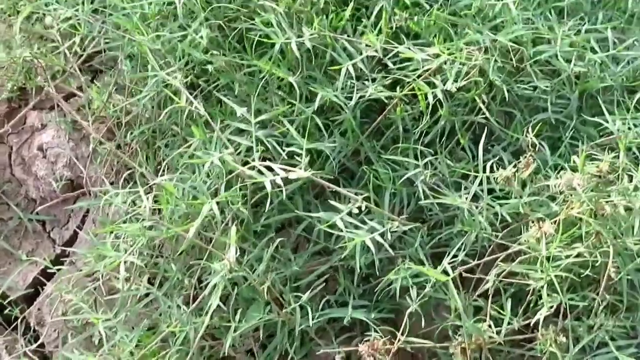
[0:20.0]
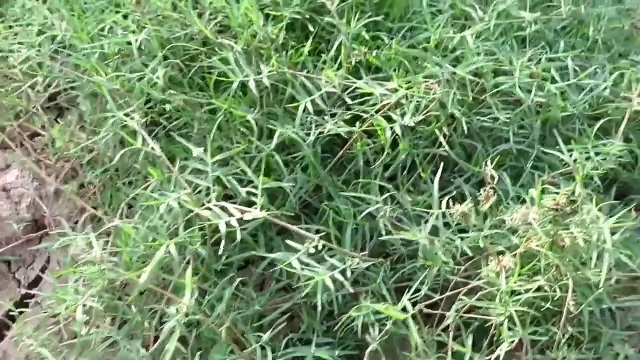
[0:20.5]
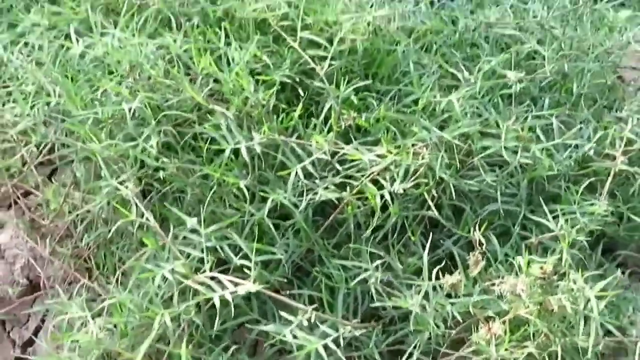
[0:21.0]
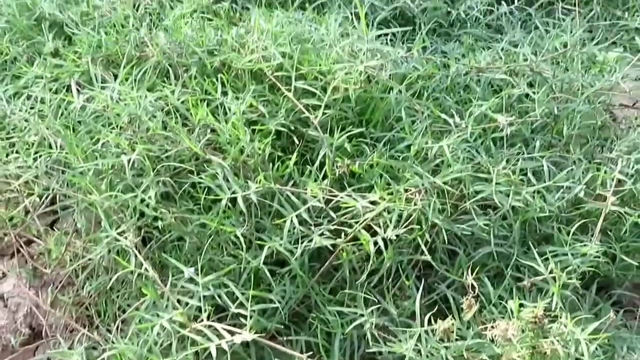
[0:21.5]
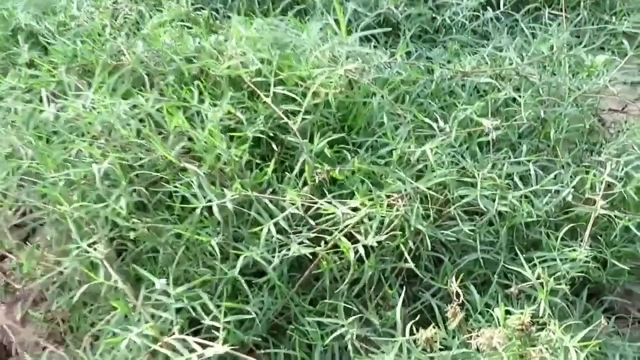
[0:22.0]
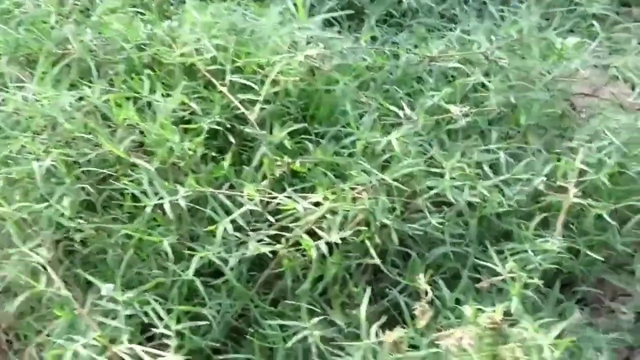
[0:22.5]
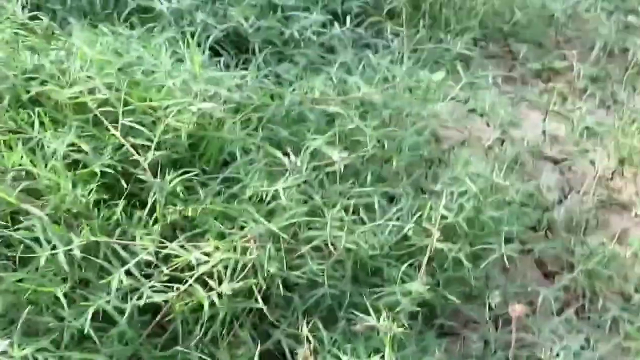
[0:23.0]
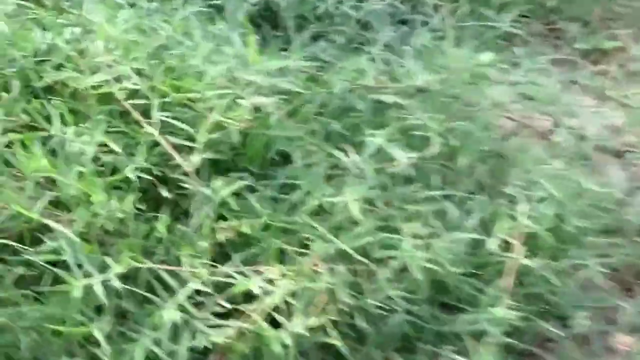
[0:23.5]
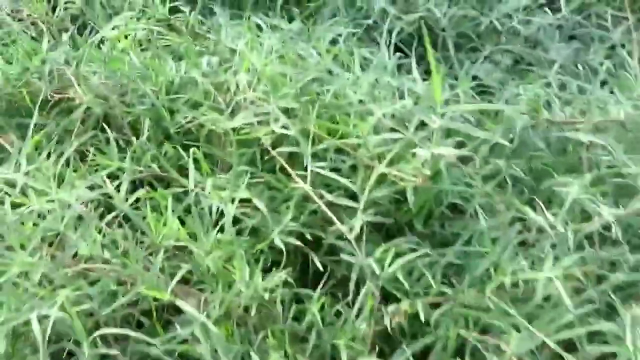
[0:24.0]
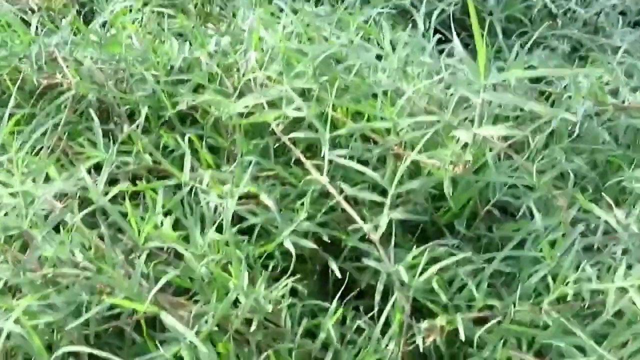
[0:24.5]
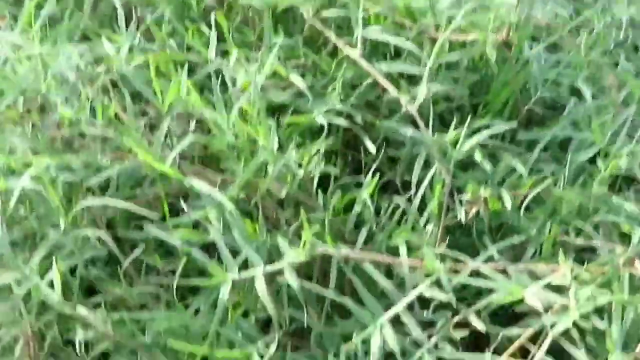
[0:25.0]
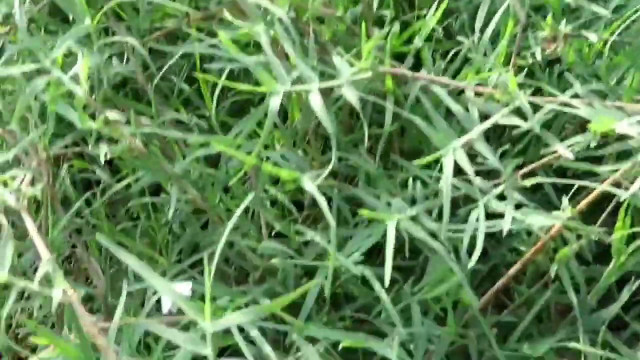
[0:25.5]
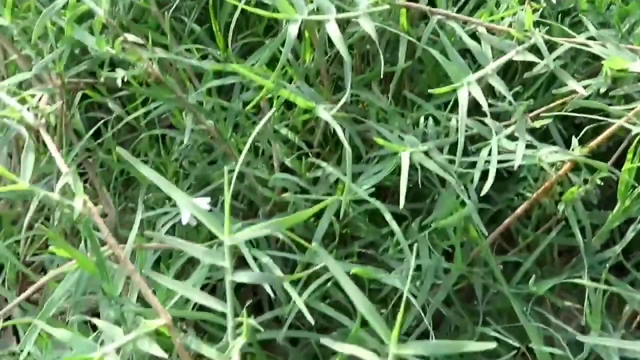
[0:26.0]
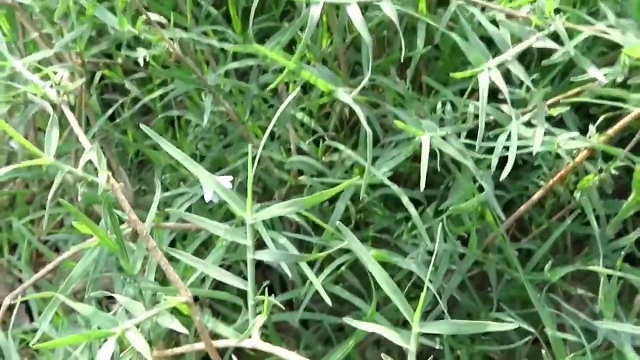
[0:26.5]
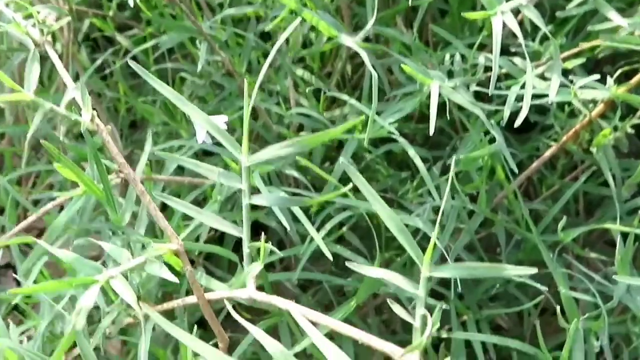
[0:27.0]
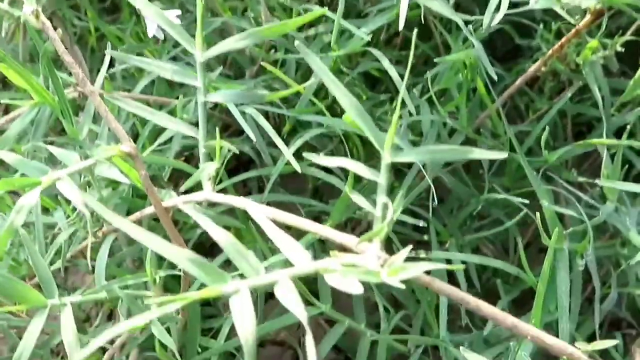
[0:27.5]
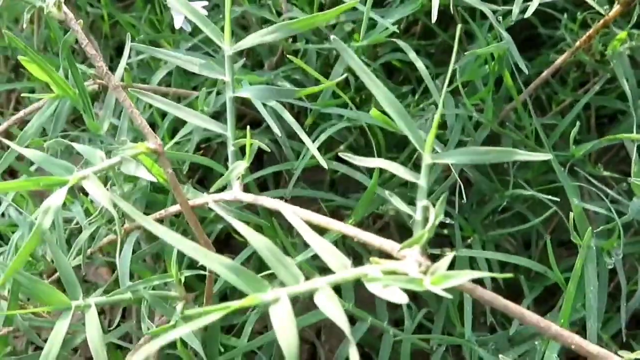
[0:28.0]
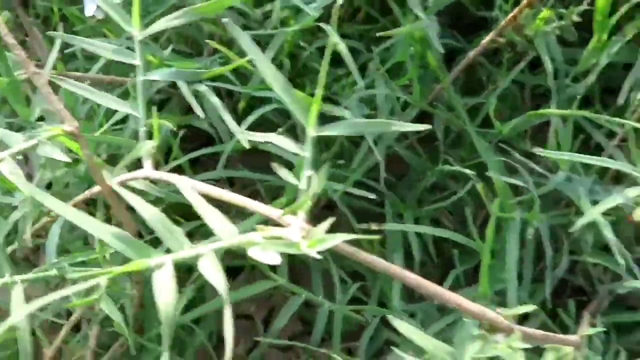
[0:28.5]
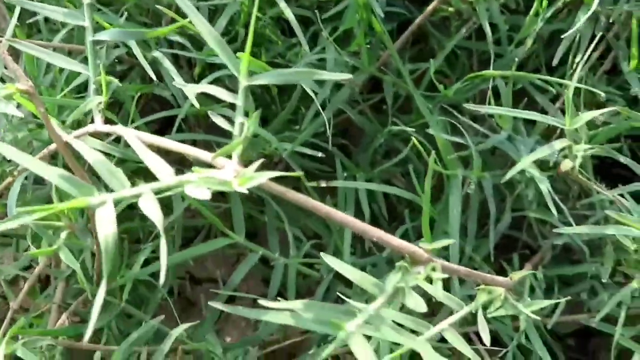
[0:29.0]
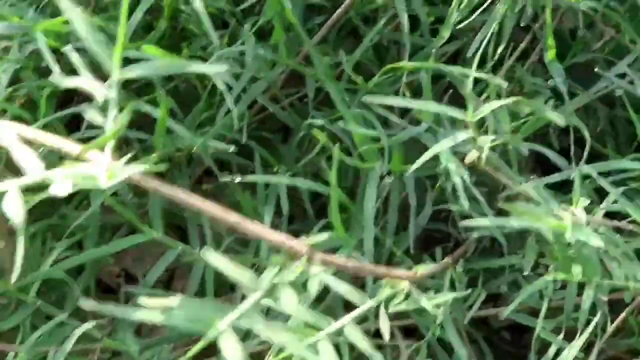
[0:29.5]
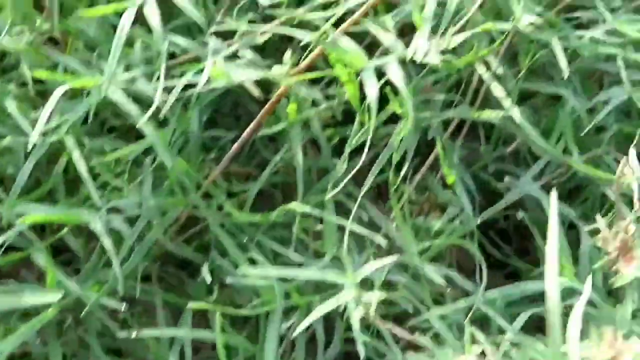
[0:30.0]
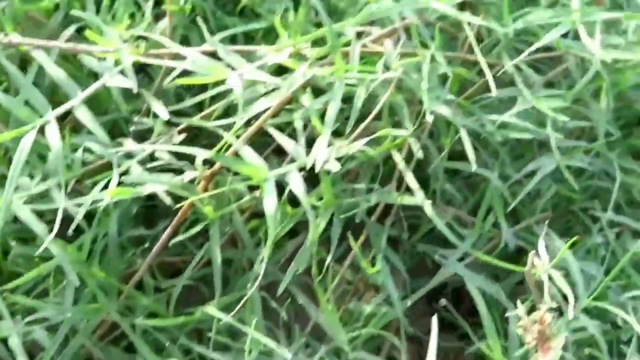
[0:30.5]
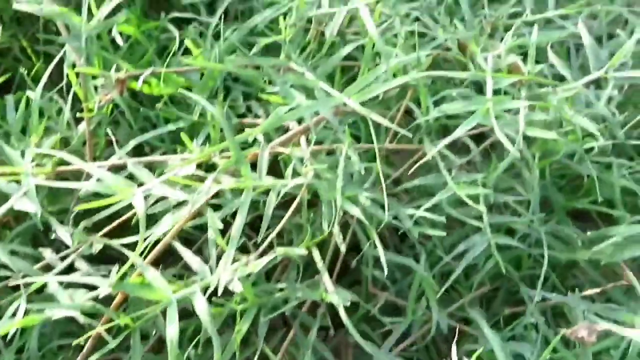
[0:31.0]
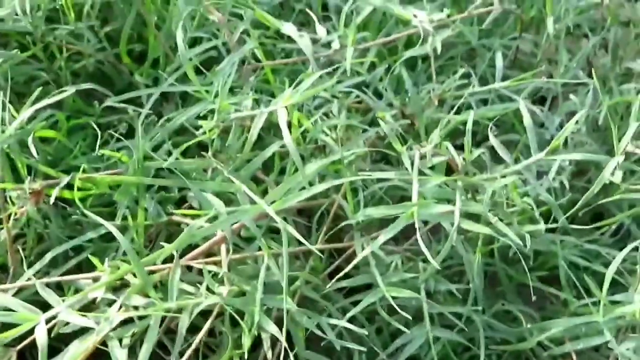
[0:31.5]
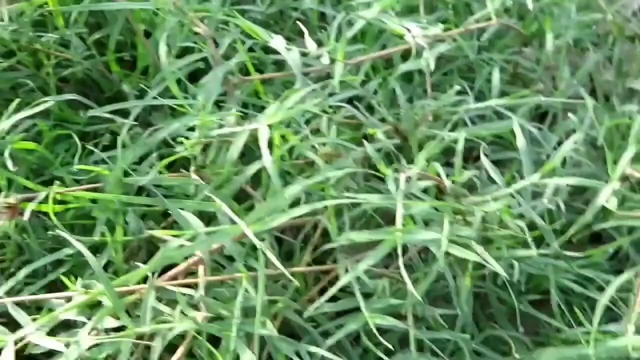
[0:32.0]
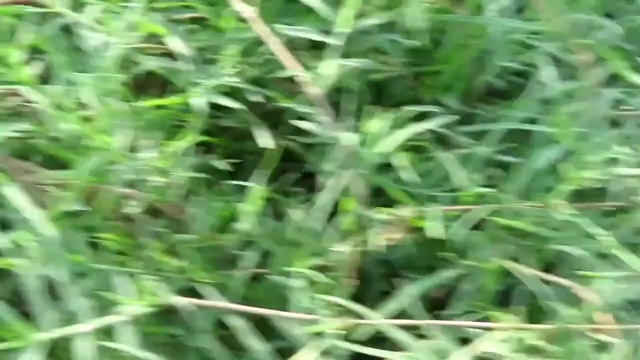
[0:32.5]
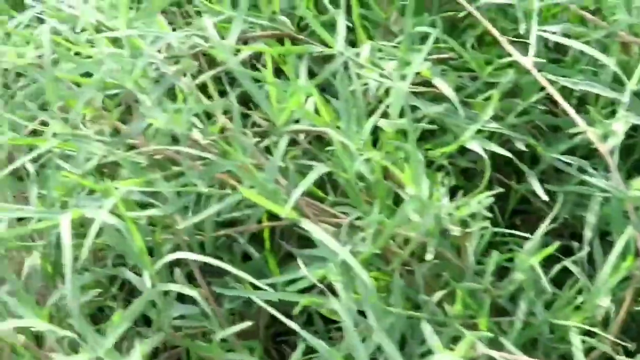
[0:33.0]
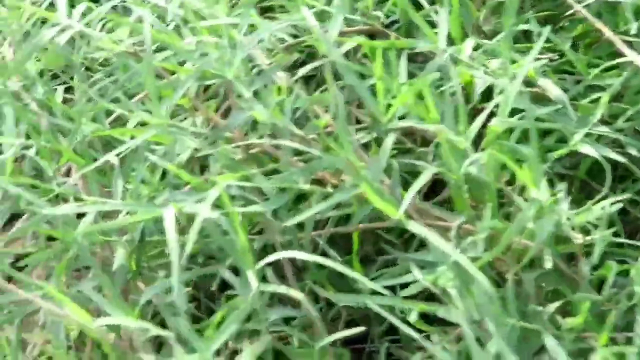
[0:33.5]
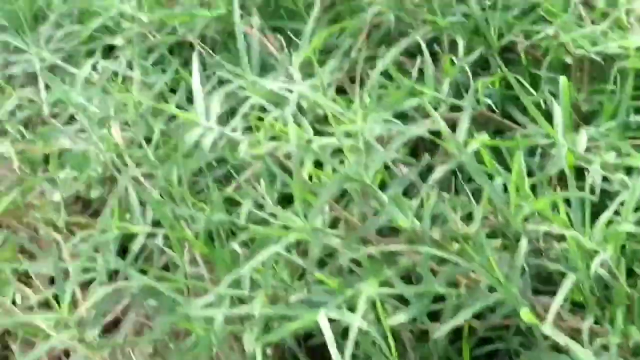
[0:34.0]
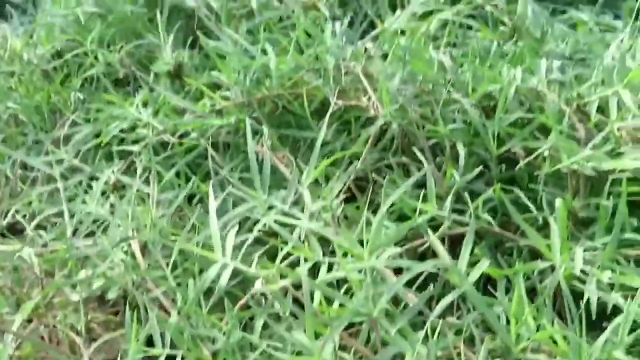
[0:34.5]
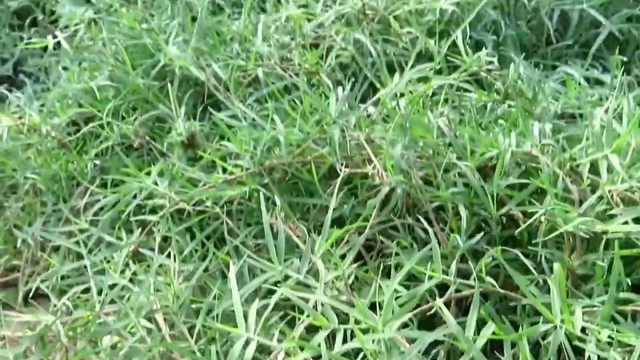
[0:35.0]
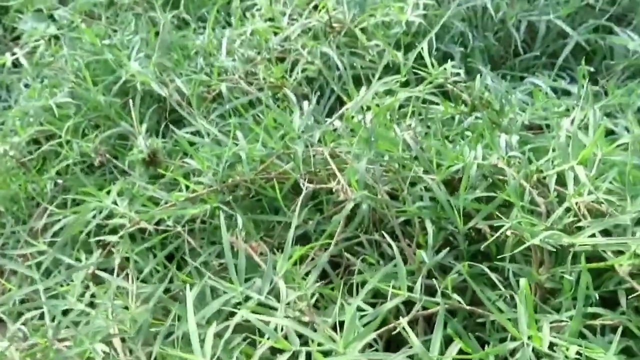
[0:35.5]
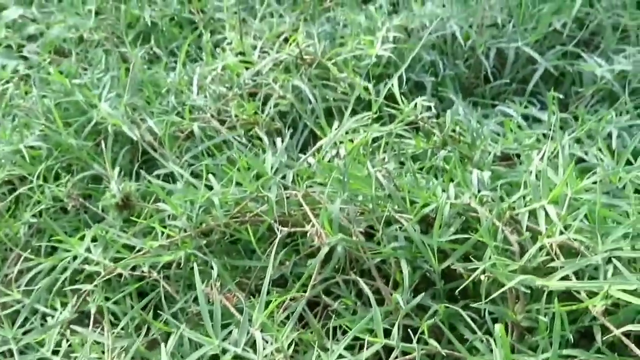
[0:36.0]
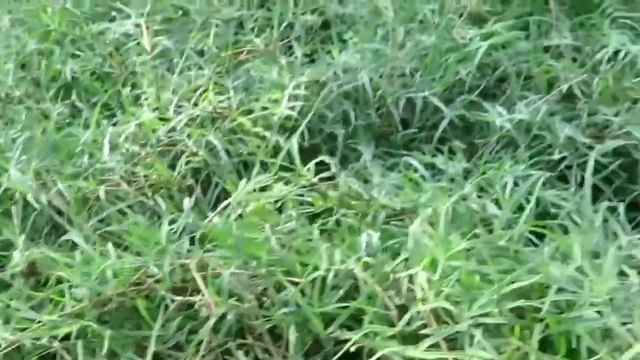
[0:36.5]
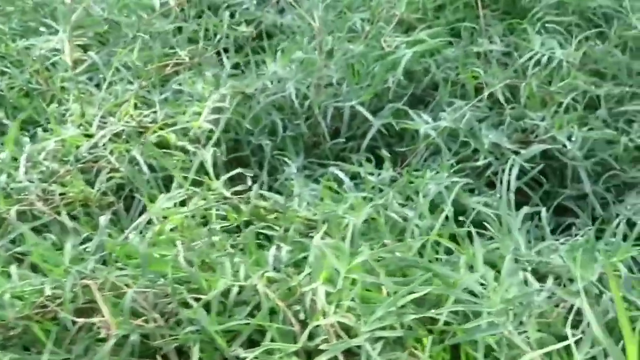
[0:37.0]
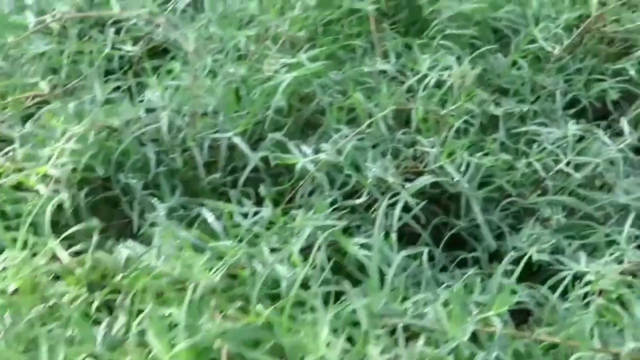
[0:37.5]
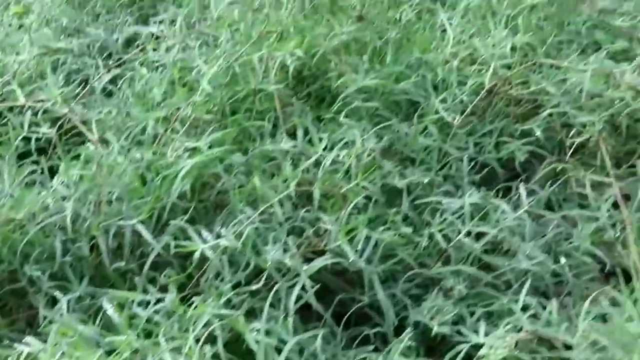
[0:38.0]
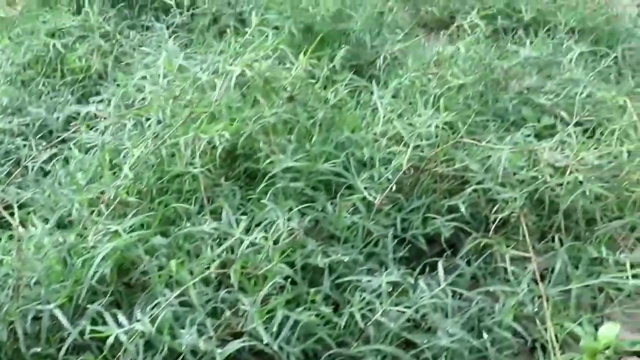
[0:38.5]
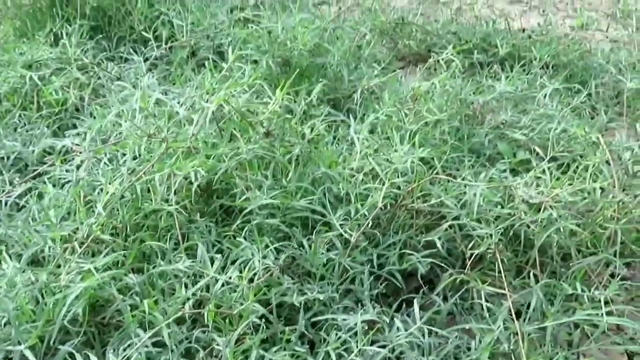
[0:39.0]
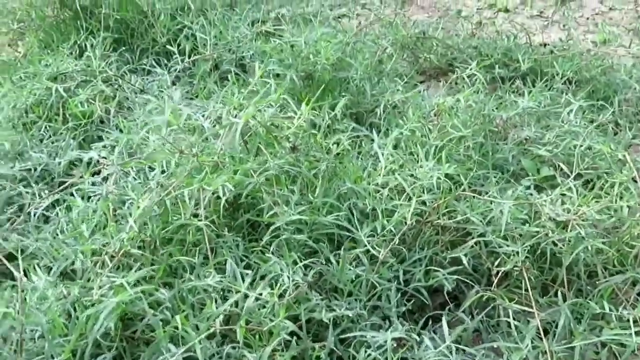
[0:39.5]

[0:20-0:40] A view from above shows longer grass that is long and tangled. The camera gradually moves closer and then into the grass itself, showing it from above and from the side. The camera then pans out slightly, giving a slightly wider view of the scenery, which still contains only some dirt and the longer grass. It is the middle of the day, and the shot shows a relatively small patch of grass with no visible wildlife. No nettles are visible in this grass.